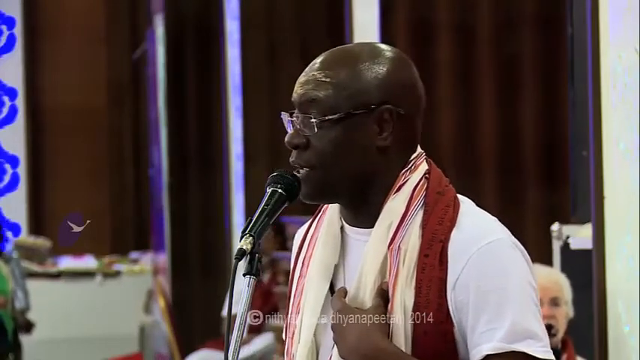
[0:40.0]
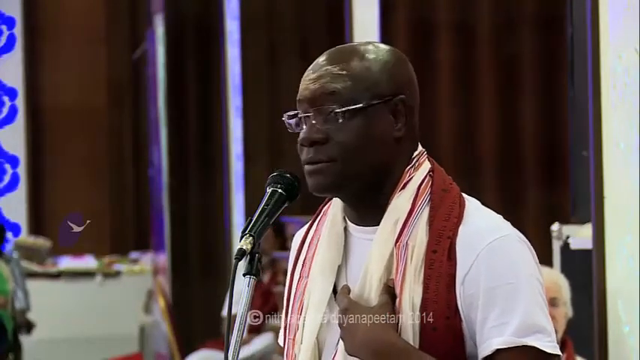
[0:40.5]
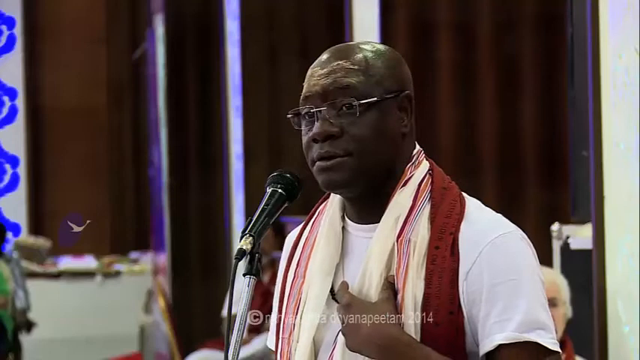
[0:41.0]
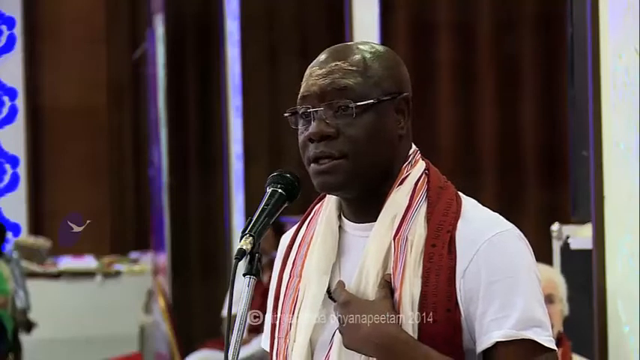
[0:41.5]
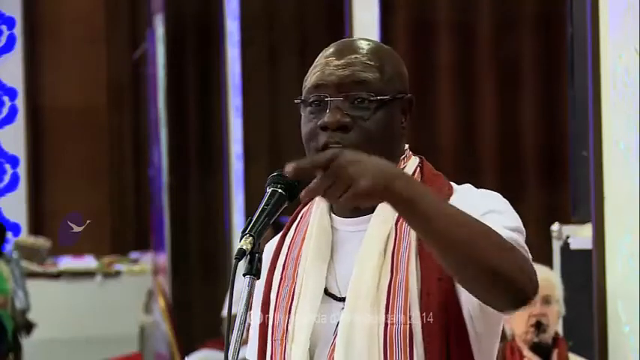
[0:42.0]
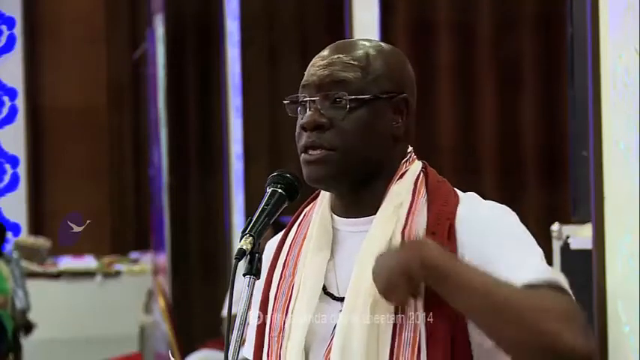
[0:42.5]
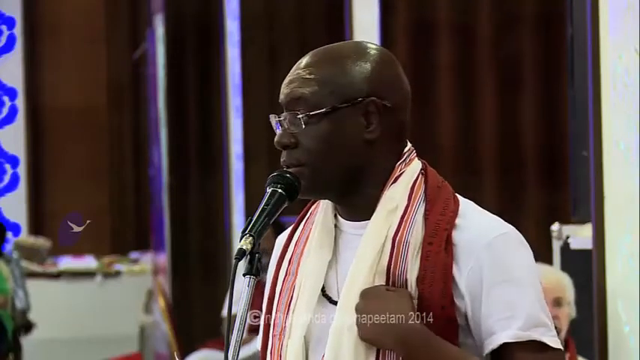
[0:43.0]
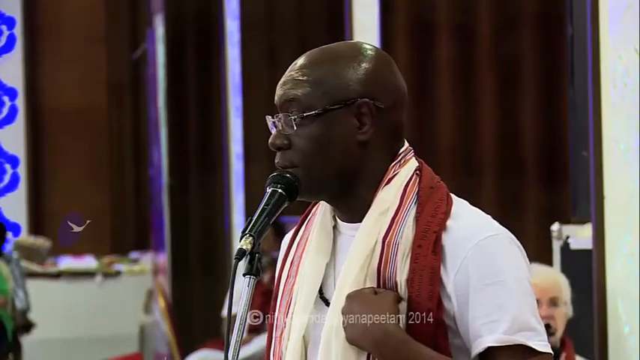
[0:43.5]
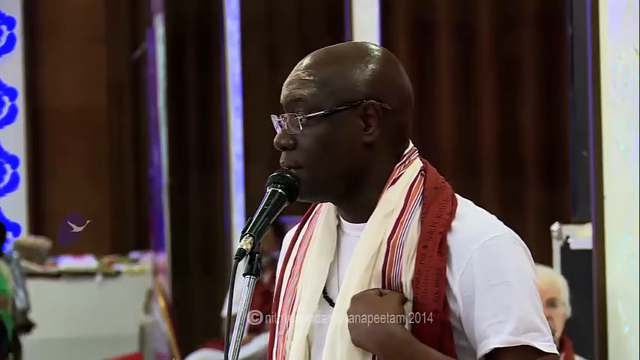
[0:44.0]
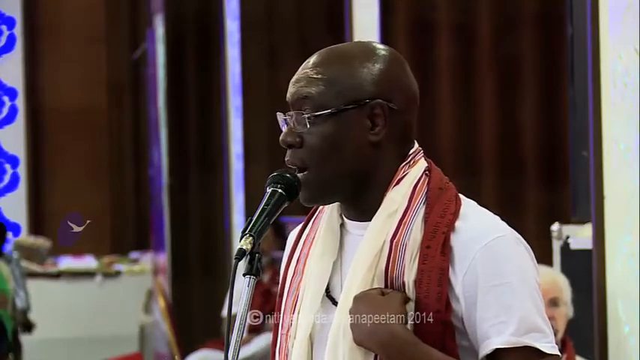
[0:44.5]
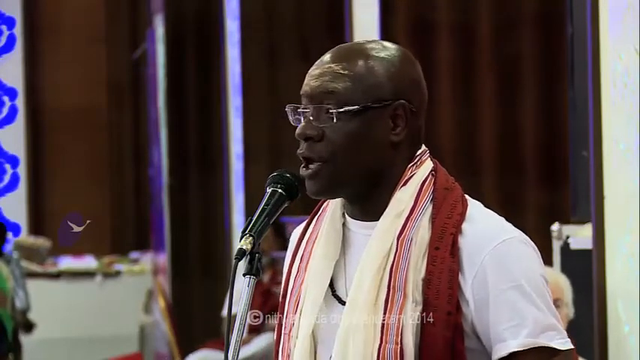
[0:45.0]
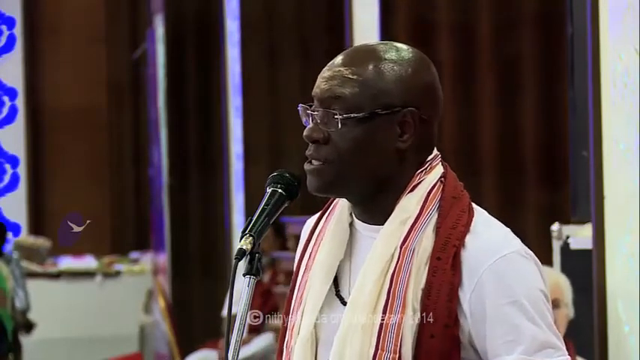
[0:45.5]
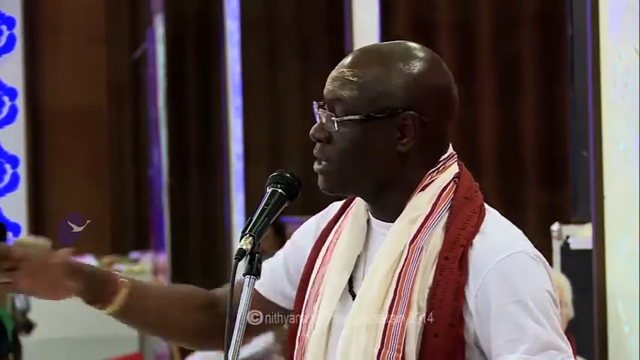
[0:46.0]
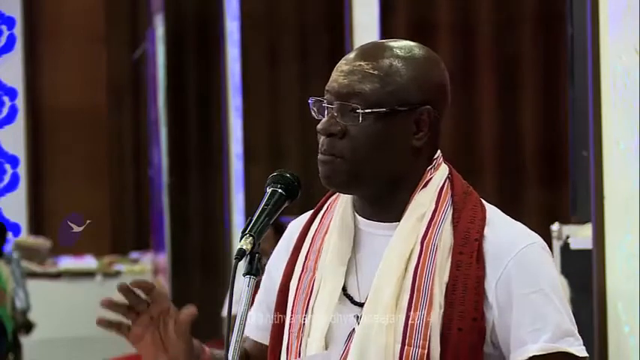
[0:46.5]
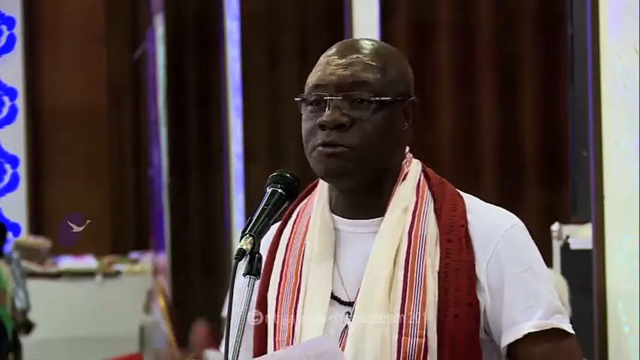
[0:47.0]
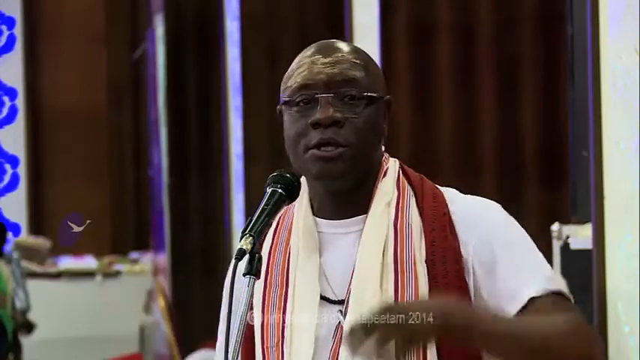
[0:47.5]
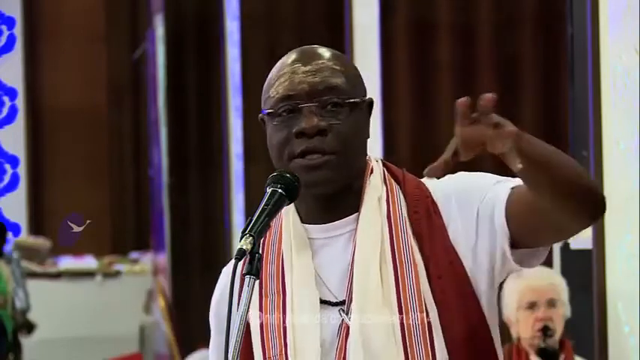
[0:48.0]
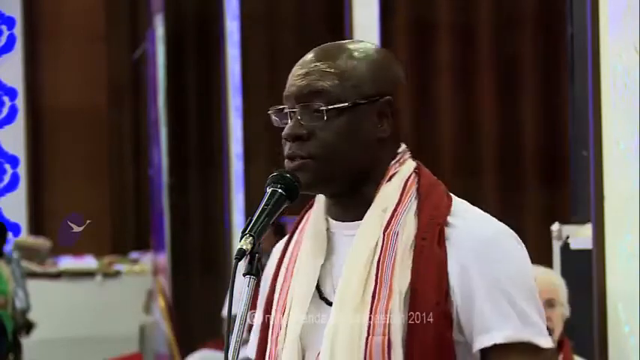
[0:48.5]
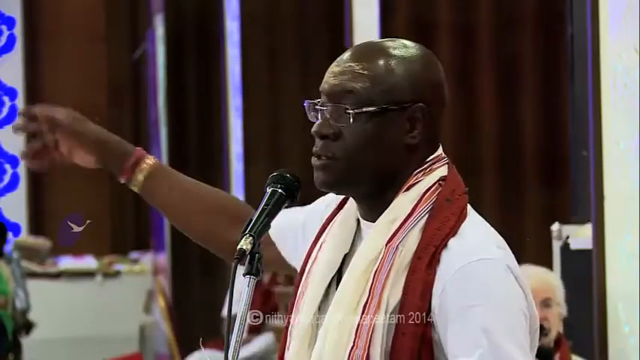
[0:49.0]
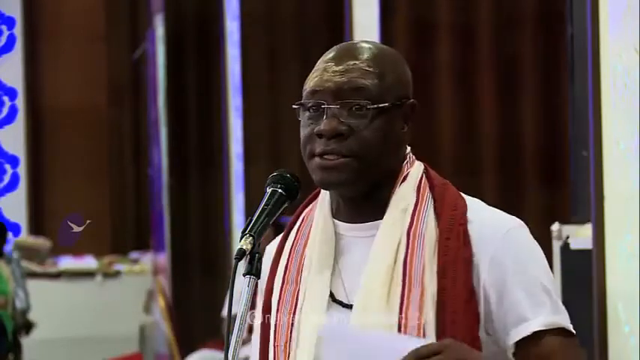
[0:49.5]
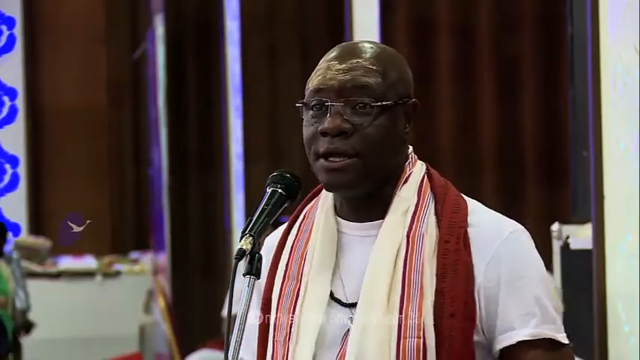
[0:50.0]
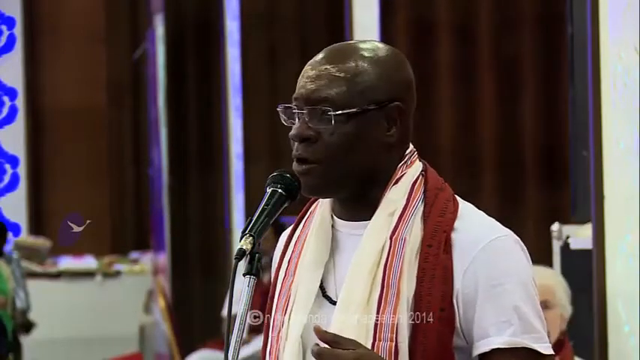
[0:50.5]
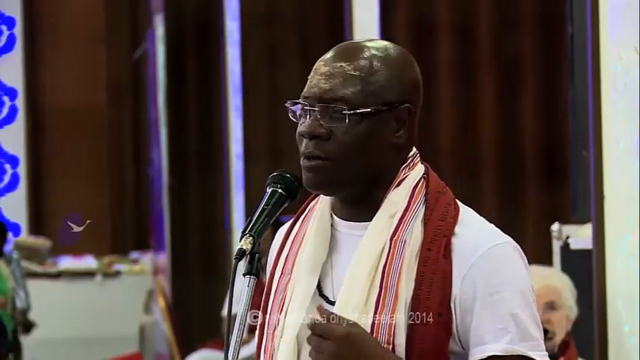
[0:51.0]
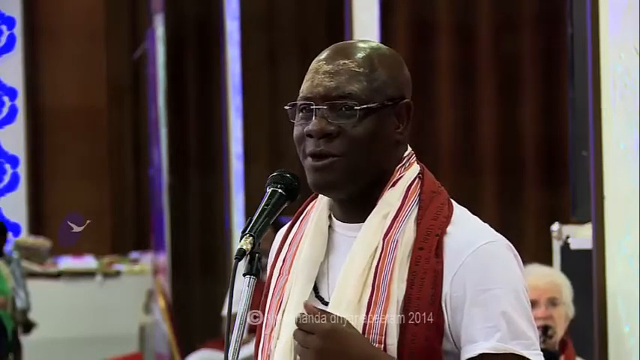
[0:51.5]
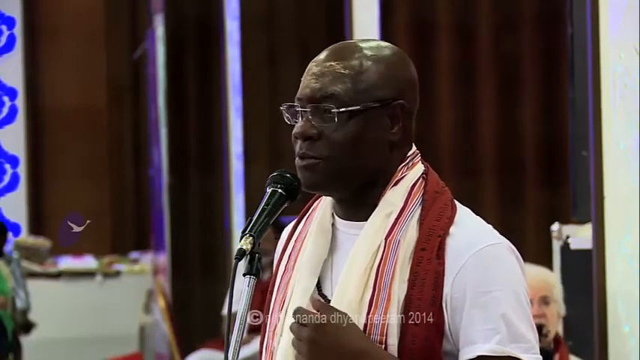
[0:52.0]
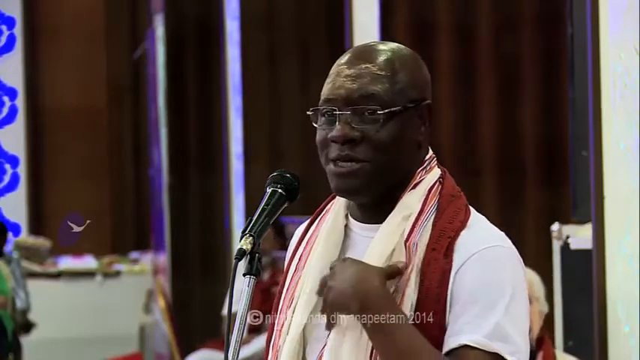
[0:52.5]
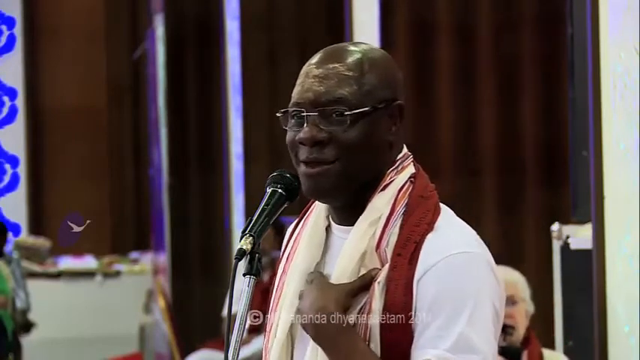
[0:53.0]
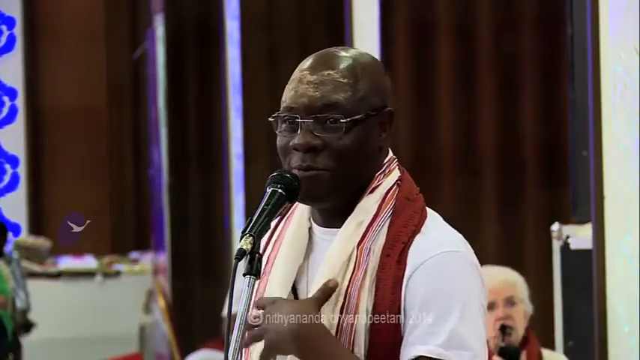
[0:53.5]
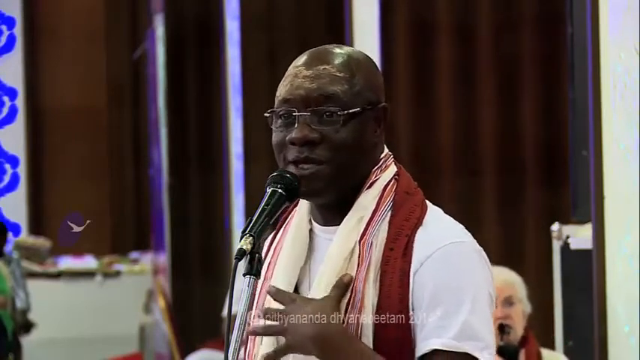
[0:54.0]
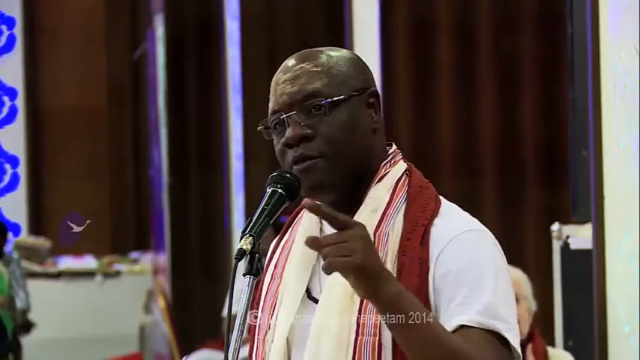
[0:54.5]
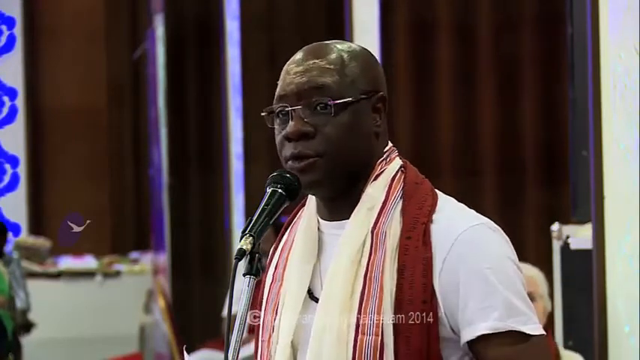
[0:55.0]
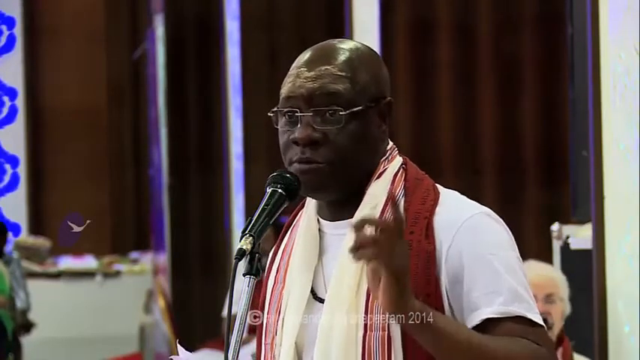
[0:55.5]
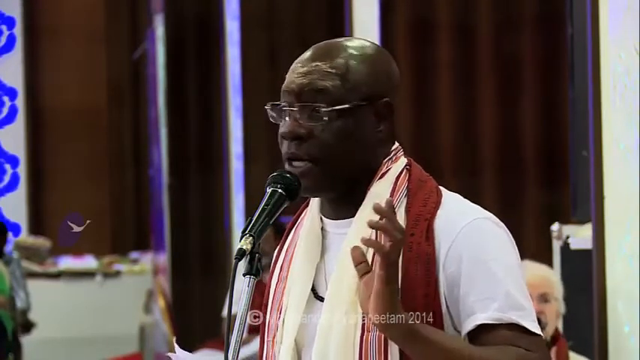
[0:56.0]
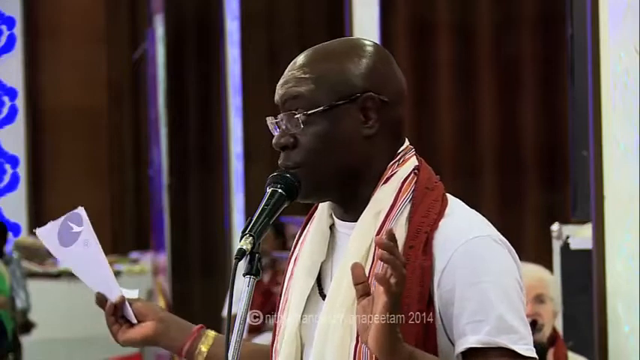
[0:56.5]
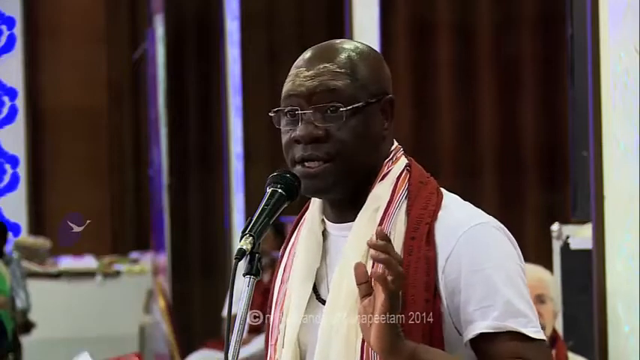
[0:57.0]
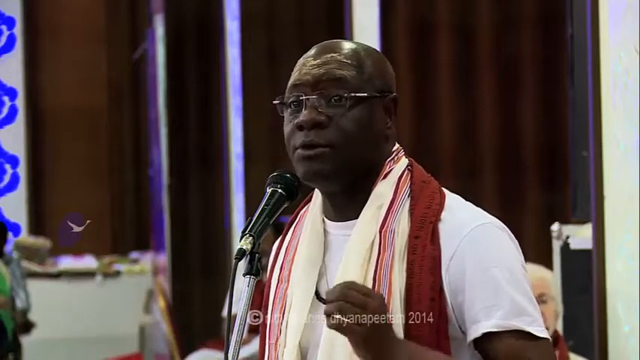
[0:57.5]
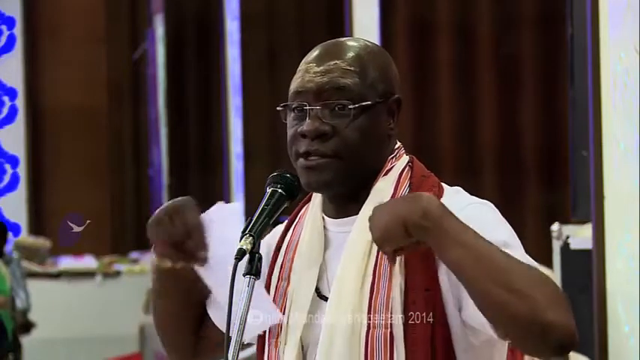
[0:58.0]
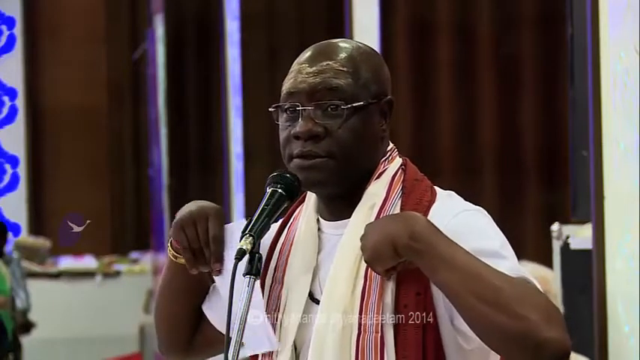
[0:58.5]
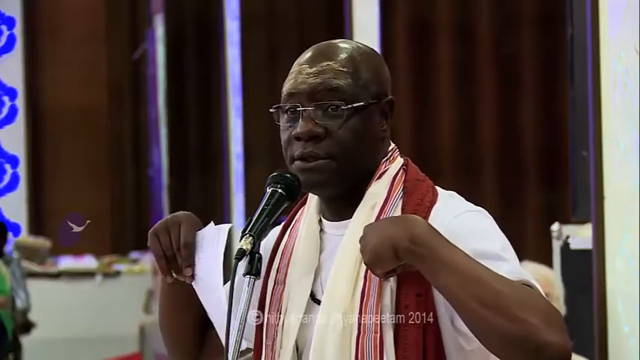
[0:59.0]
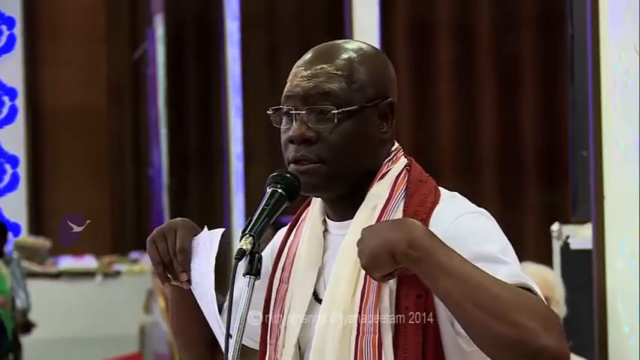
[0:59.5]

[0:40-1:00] The video, named Nityananda Dhyanapeetam and concerning a spiritual awakening, shows a talk given by a man named Jorge Coelh, apparently spelled C-O-E-L-H. He is a very dark-skinned Black man with rectangular glasses, a white T-shirt, and a scarf around his neck that makes him look as though he is perhaps trying to appear Hindu. An older lady with gray hair sits behind him, and there are very dark red curtains, almost rust-colored. He uses his left hand a lot to emphasize points and holds a piece of paper in his right hand. When he turns his head, a large amount of sandalwood paste is visible across his forehead, as if applied with four fingers. He talks into a microphone, engages a lot with the audience, looks at them, and points to himself.